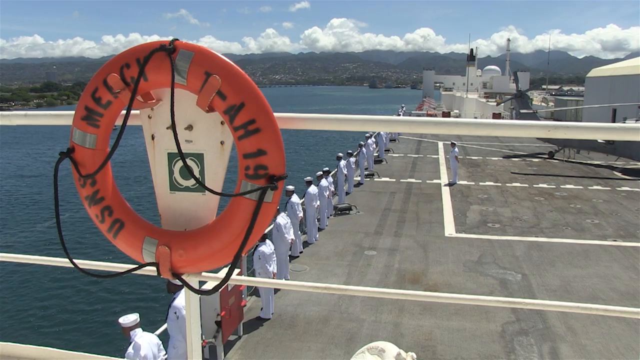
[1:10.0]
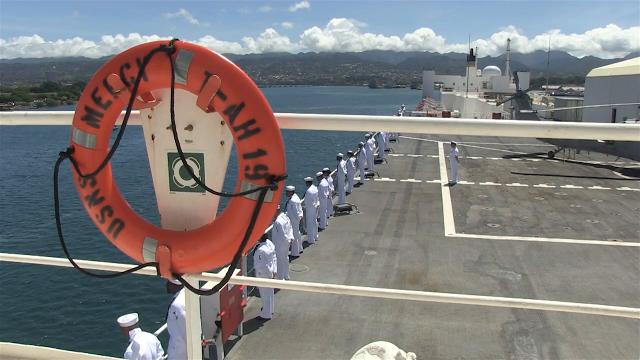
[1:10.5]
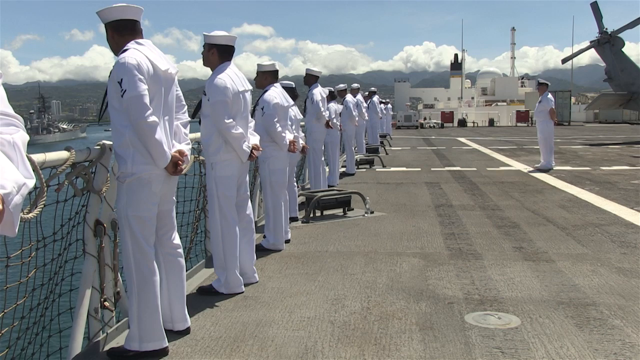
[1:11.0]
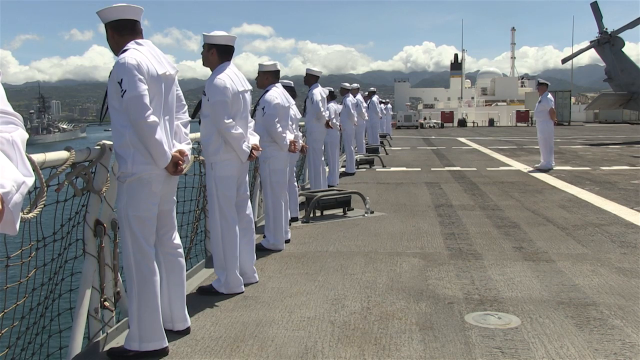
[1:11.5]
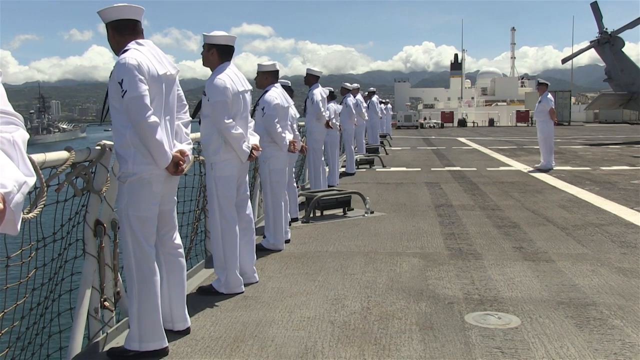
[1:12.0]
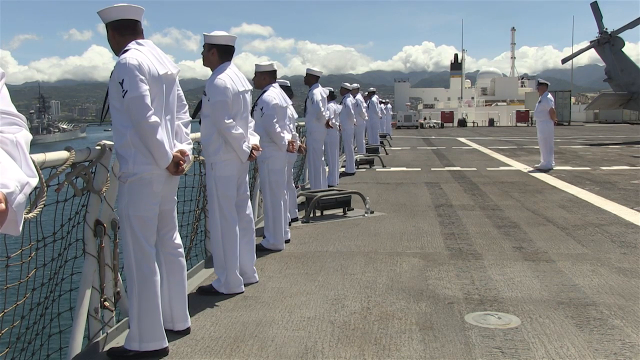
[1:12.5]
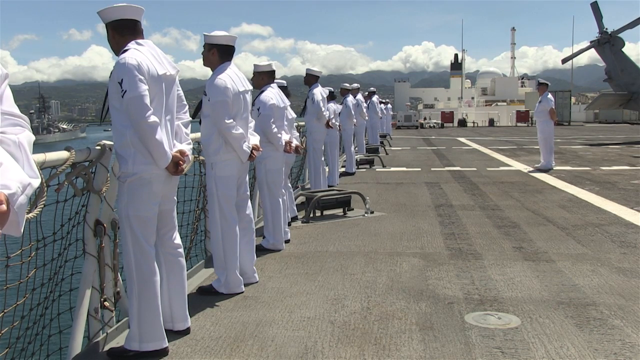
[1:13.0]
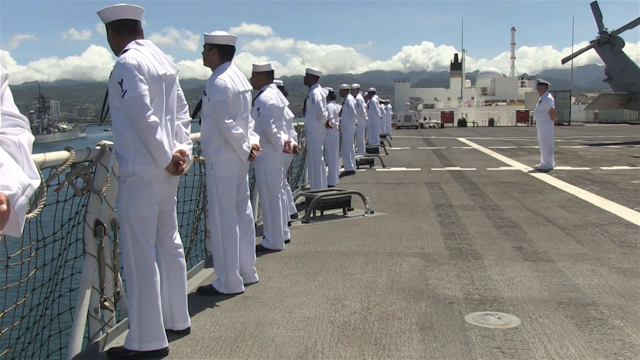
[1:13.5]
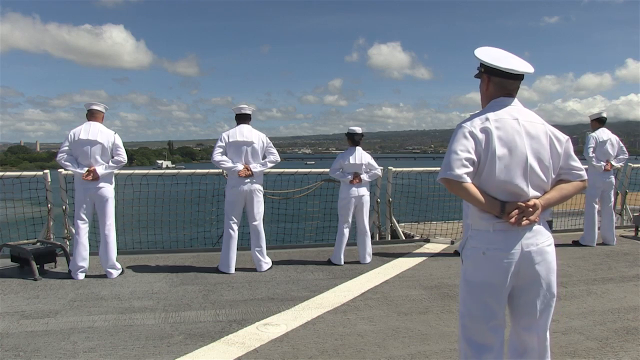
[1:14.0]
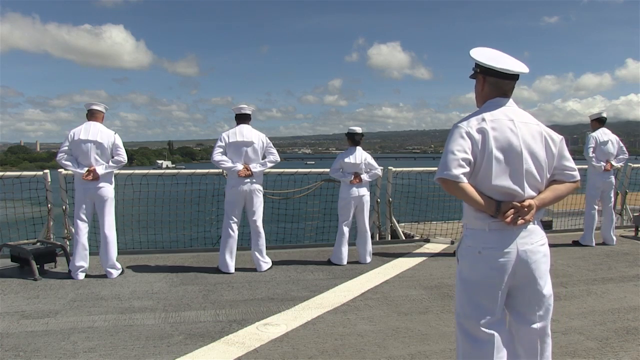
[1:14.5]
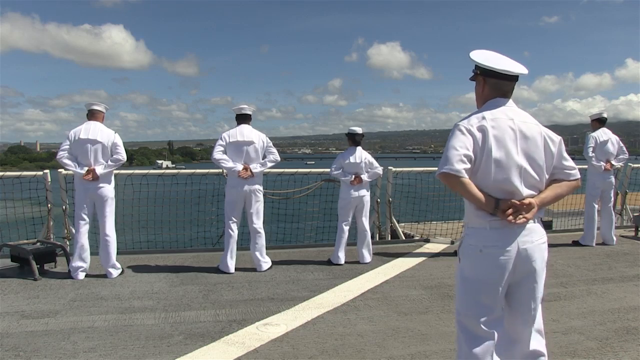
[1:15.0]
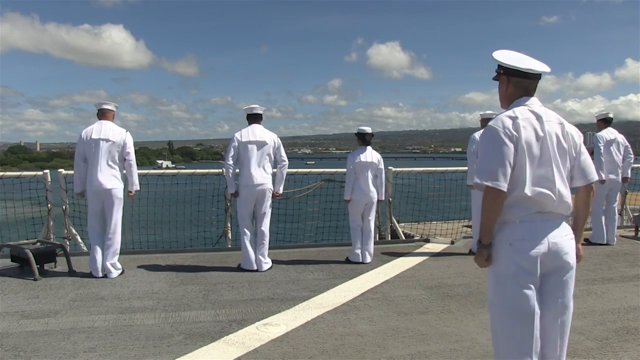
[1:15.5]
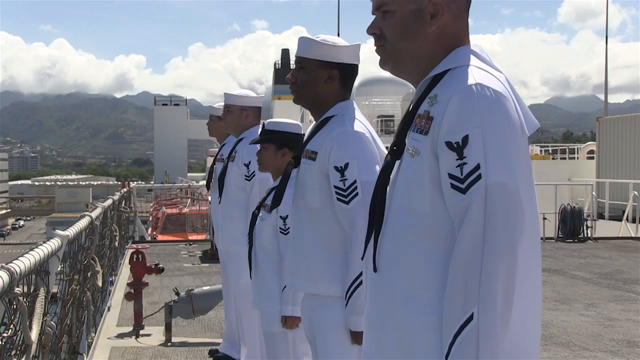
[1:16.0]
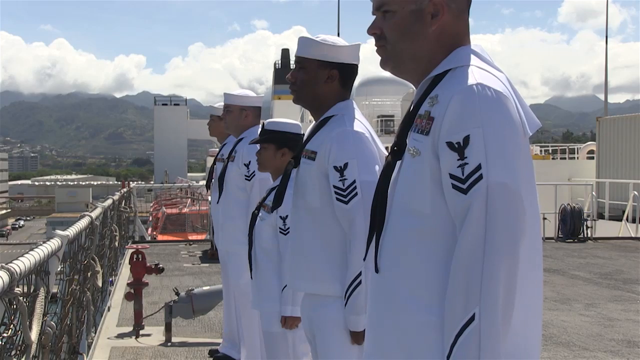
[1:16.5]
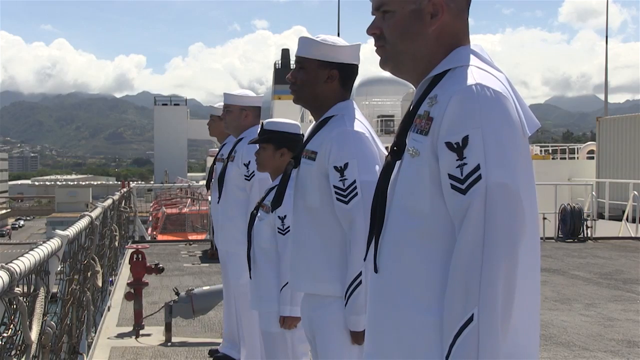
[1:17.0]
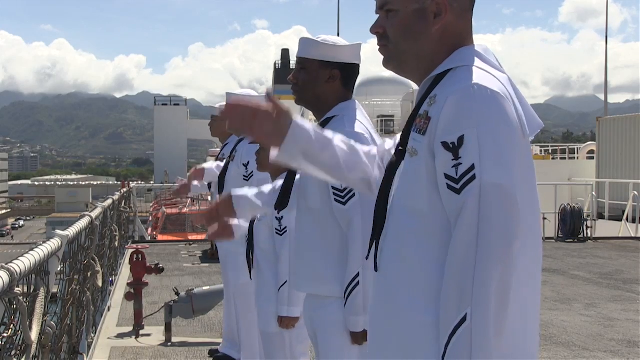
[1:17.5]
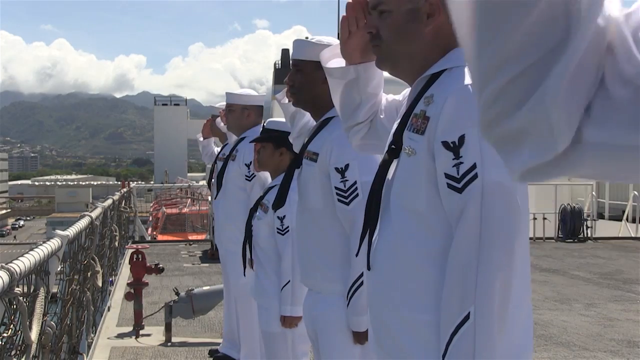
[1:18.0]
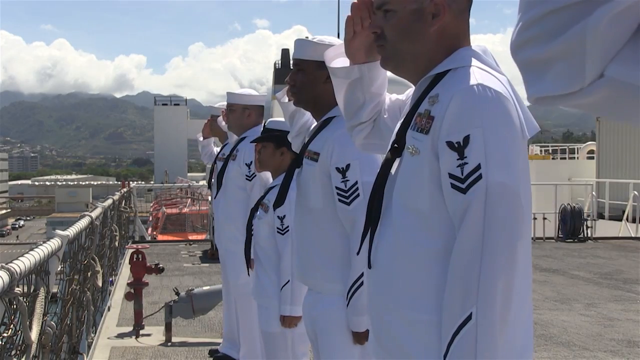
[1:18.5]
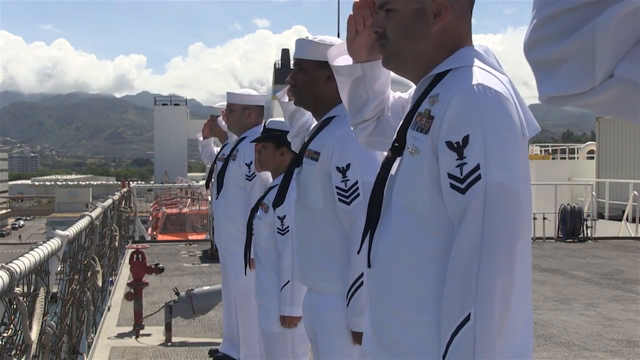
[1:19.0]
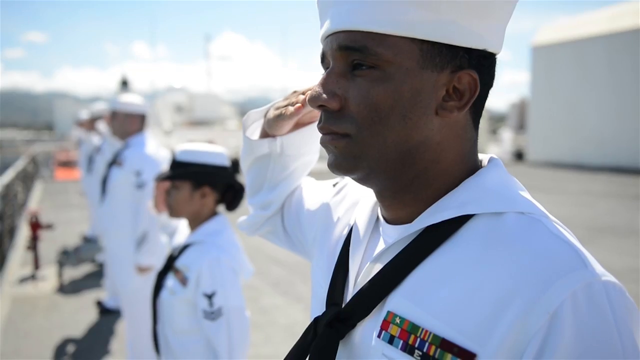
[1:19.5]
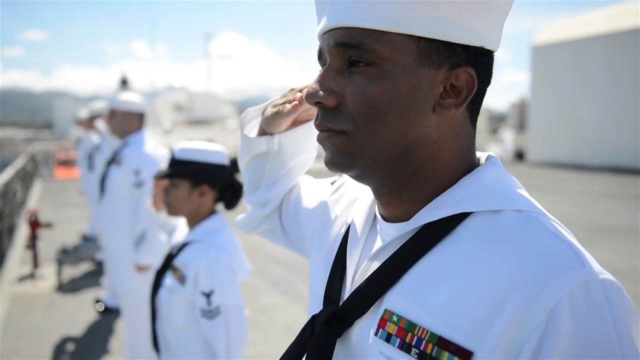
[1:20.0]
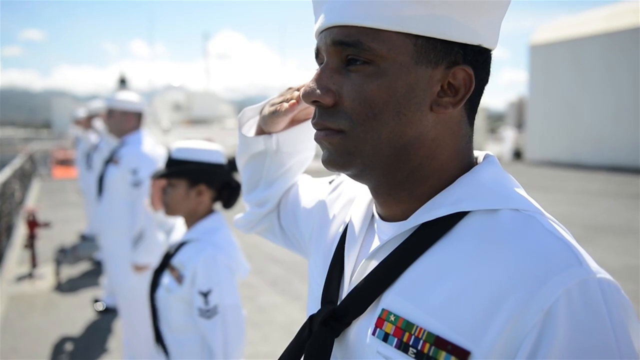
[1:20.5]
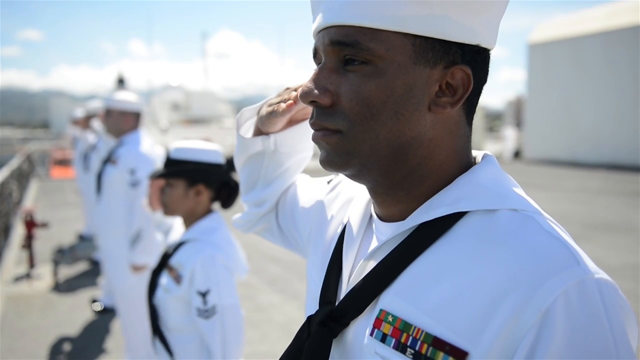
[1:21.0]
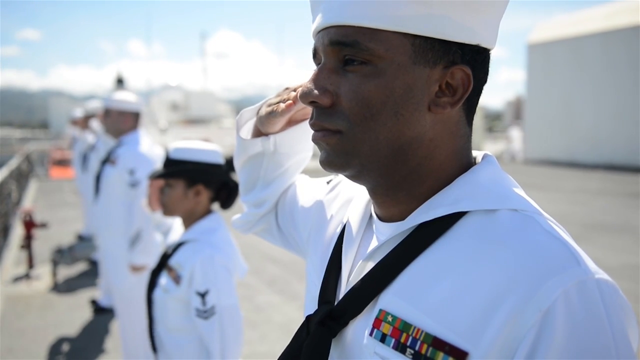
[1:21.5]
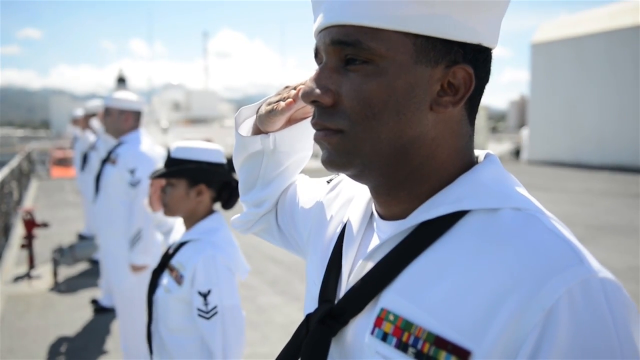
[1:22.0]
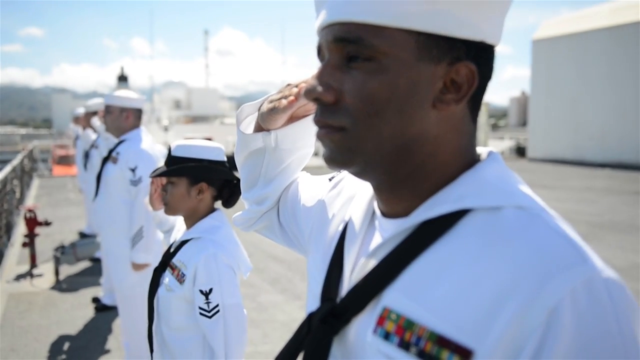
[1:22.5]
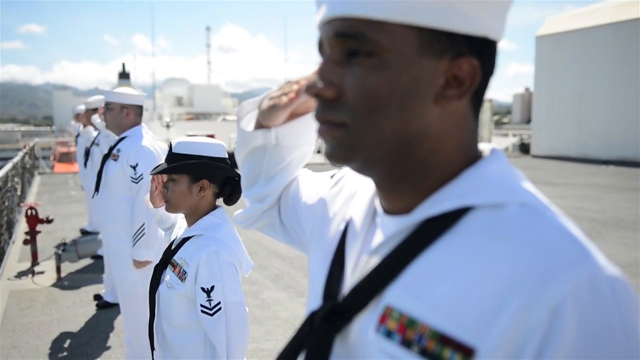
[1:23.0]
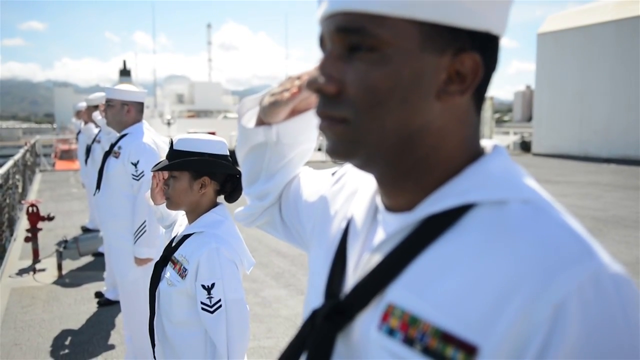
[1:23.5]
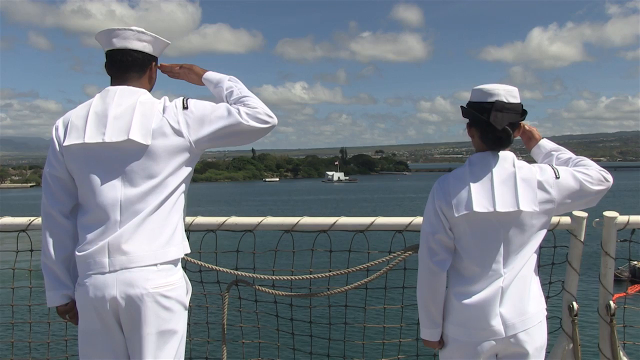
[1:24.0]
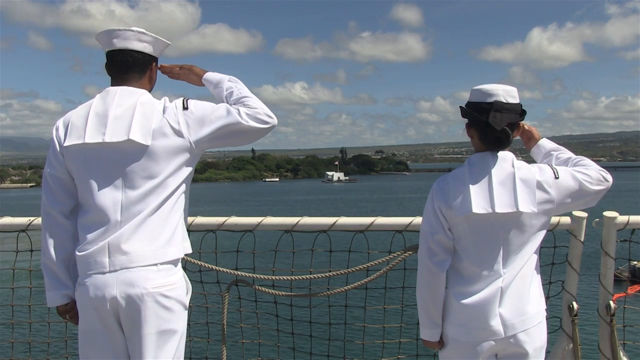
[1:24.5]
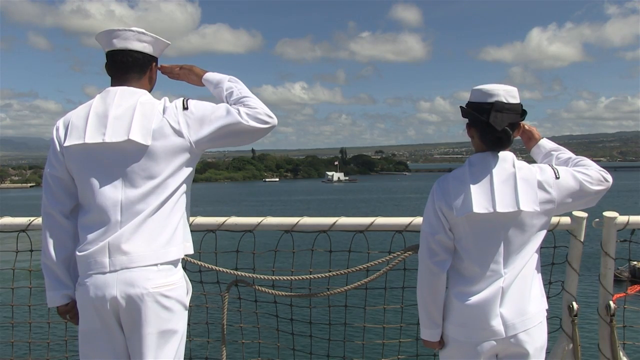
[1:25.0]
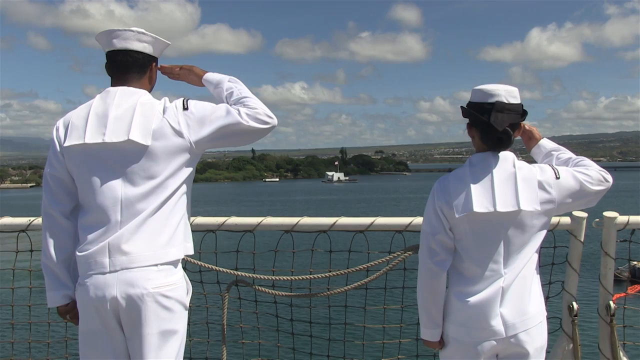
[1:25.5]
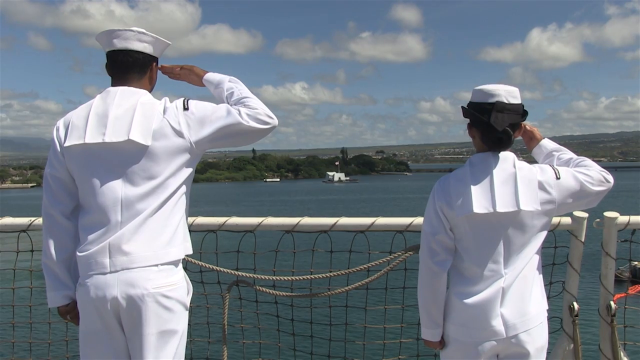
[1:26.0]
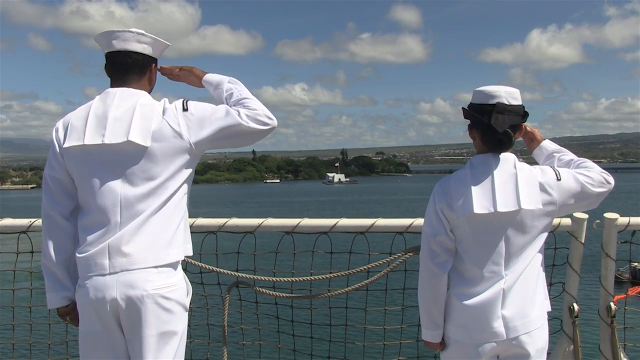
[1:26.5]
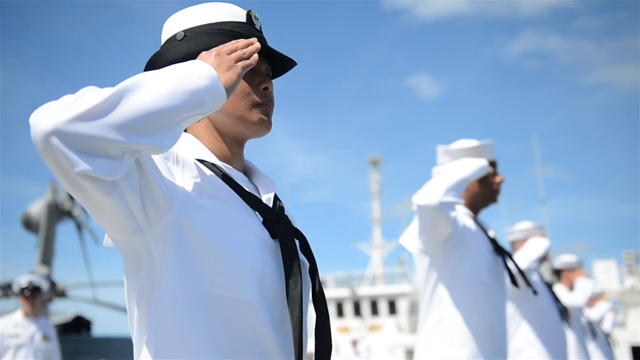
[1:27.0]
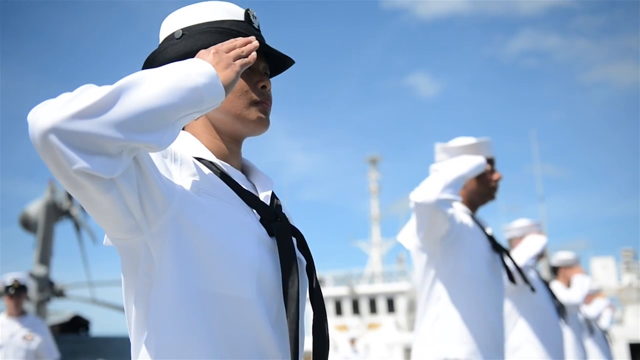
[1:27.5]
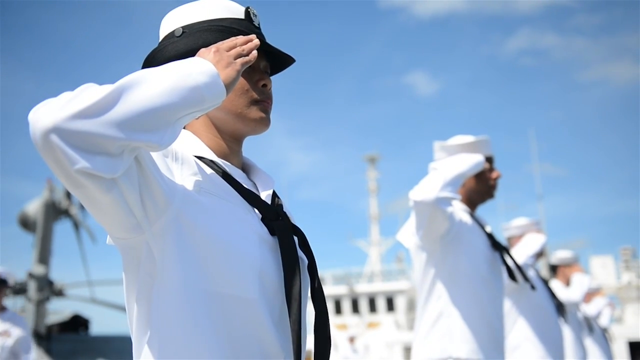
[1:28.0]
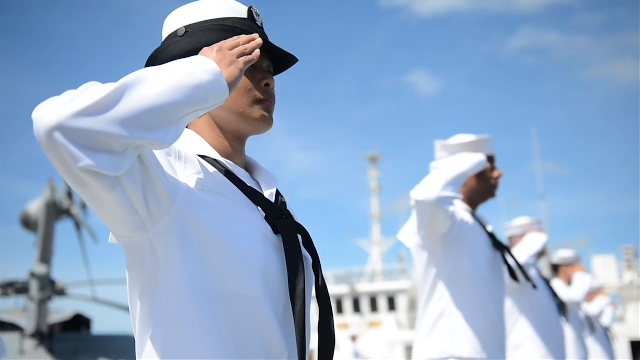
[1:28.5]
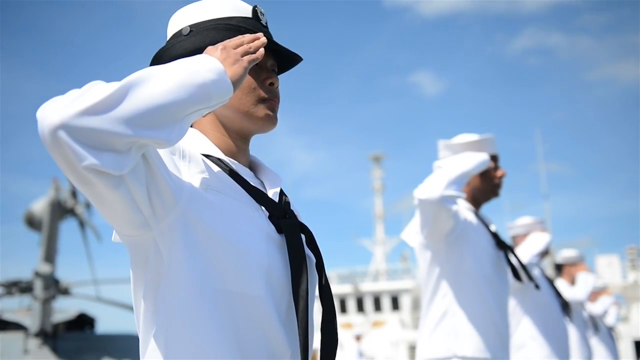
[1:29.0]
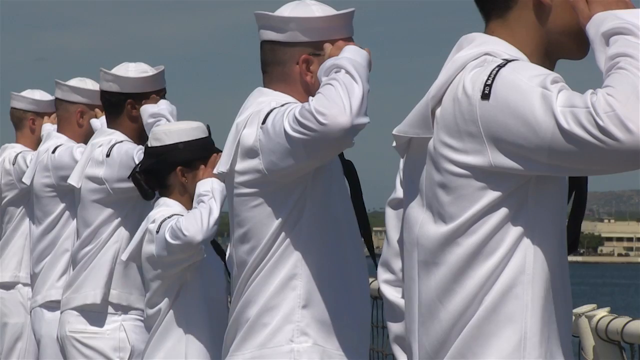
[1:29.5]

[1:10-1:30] Crew members are lined up on the side of the ship; there appear to be 12 or 13 of them. A commander stands by himself behind them. They all look out over the water toward an island, and a plane is visible in the background behind the commander. They all have their hands behind their backs with their elbows out. The commander gives them directions, and they all drop their hands to their sides, stand at attention, then salute and hold the salute. There are men and women, and they salute something off-camera, all moving in unison.